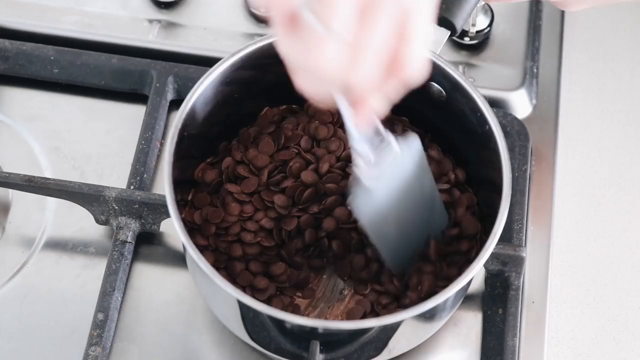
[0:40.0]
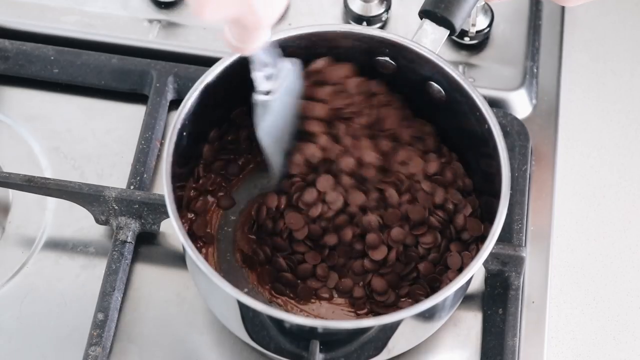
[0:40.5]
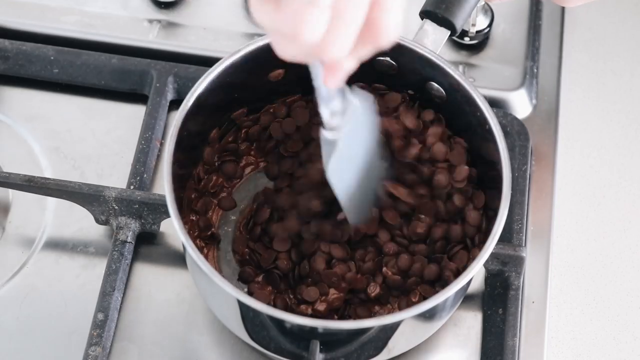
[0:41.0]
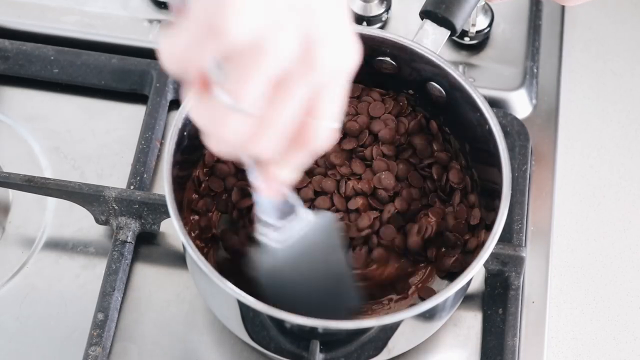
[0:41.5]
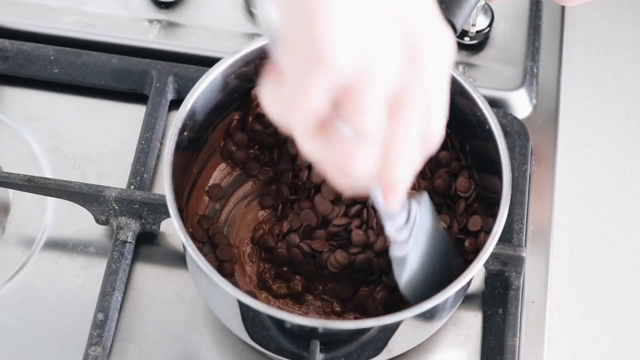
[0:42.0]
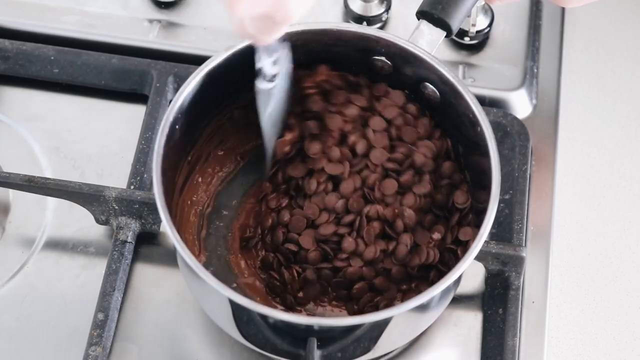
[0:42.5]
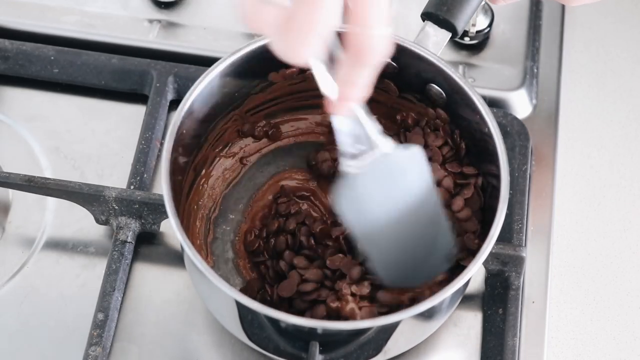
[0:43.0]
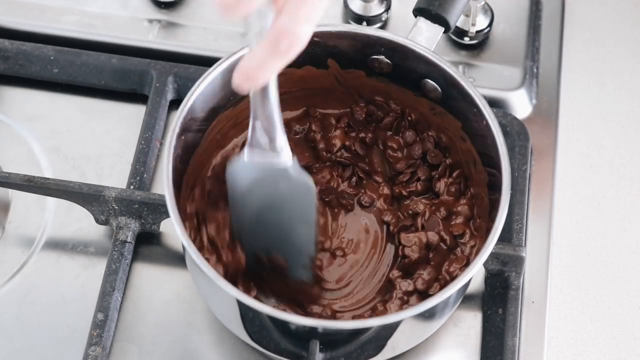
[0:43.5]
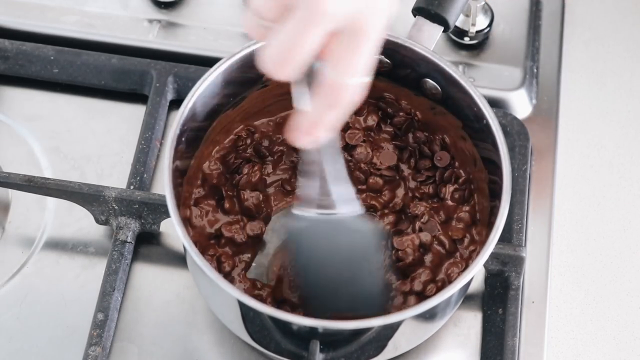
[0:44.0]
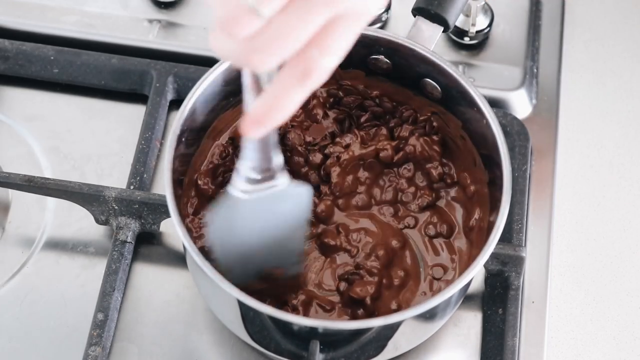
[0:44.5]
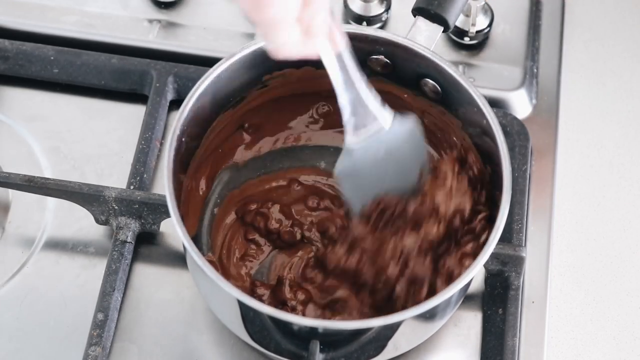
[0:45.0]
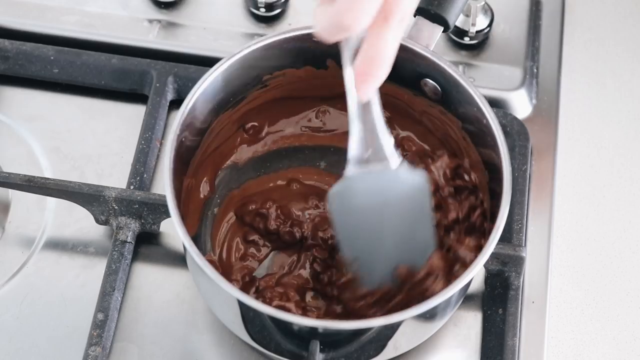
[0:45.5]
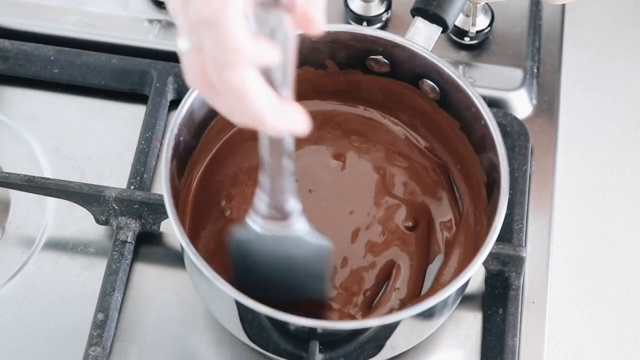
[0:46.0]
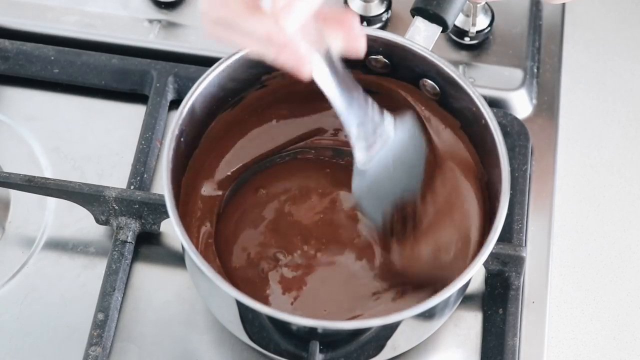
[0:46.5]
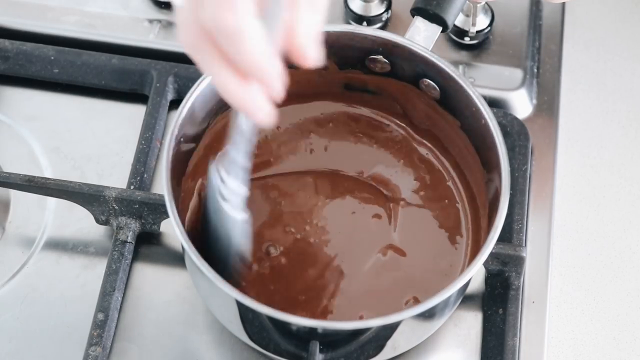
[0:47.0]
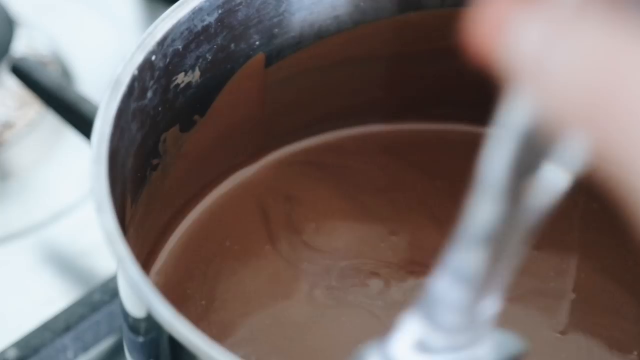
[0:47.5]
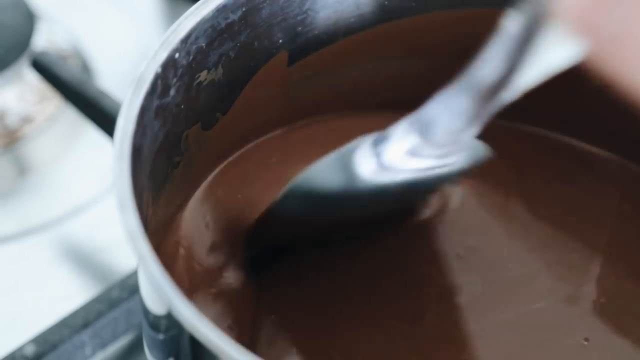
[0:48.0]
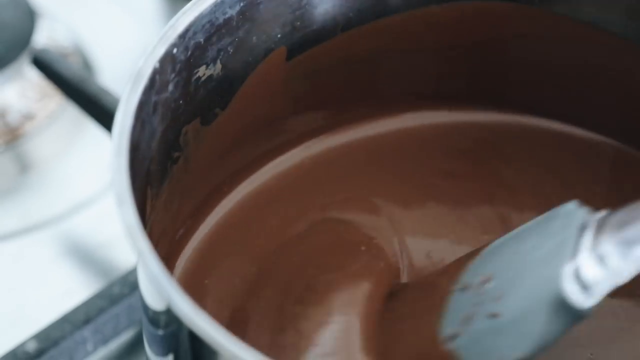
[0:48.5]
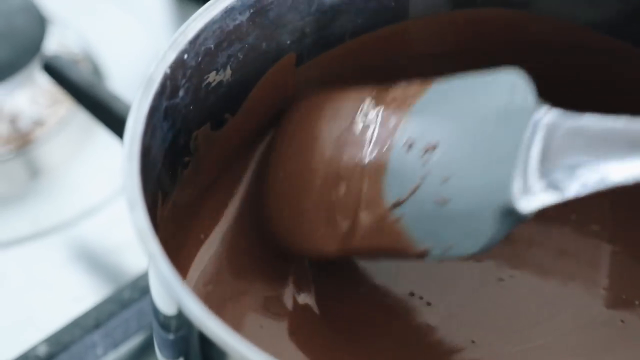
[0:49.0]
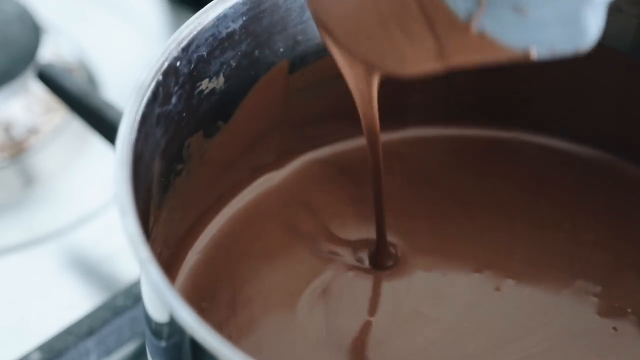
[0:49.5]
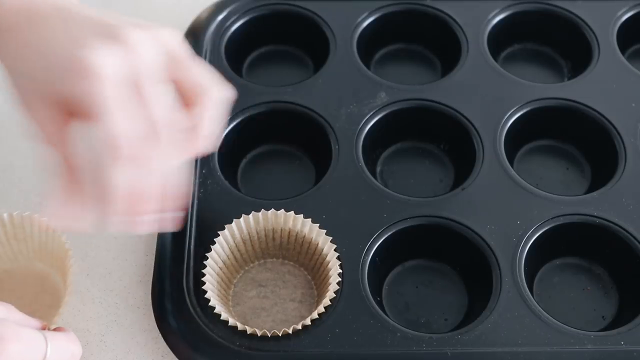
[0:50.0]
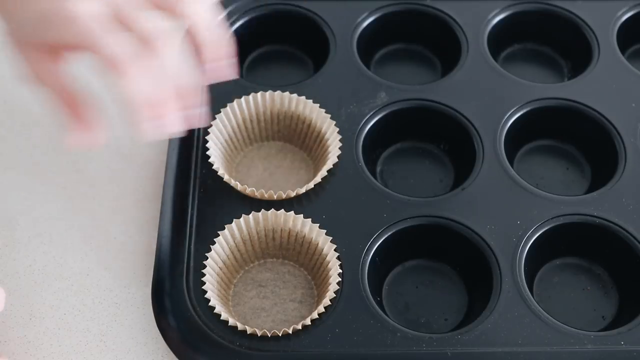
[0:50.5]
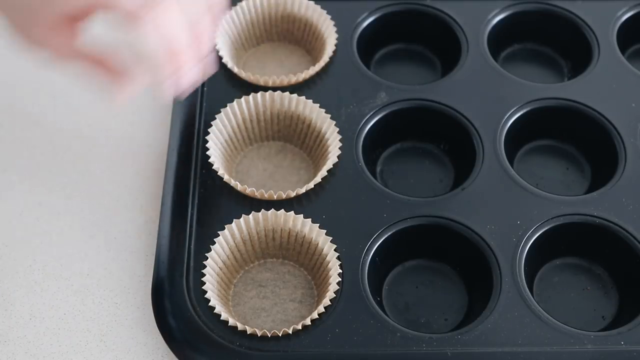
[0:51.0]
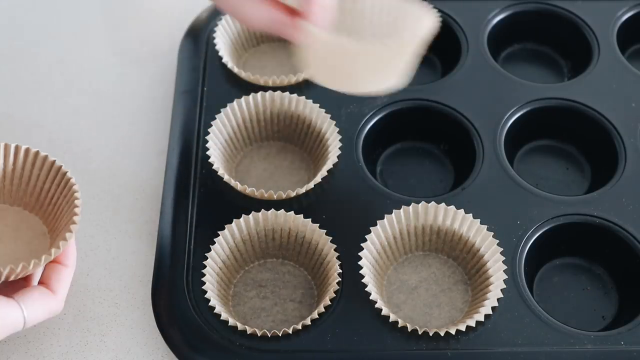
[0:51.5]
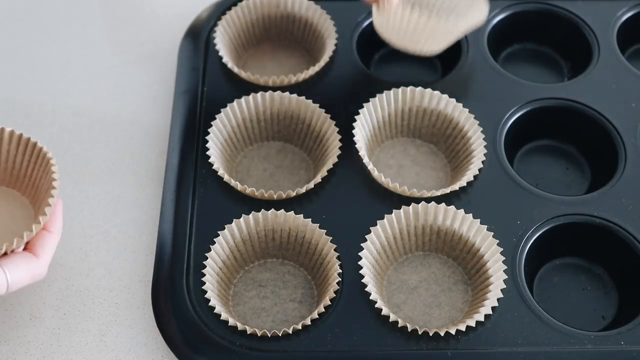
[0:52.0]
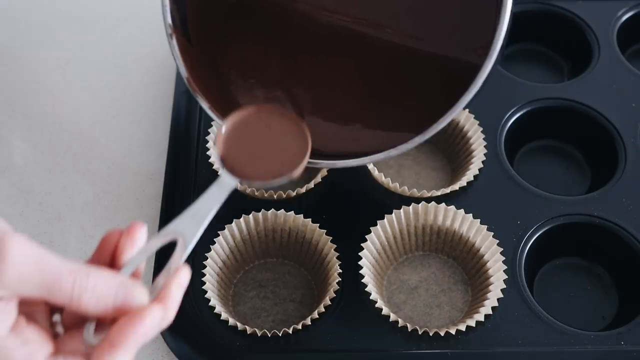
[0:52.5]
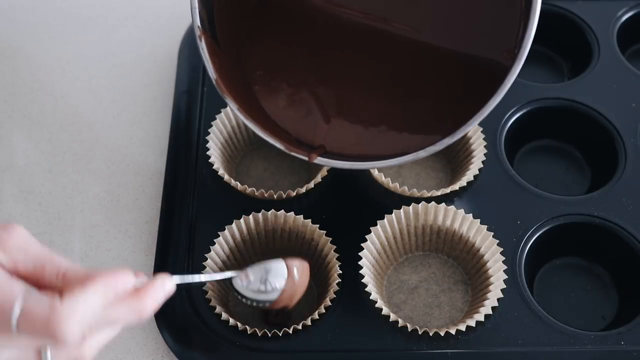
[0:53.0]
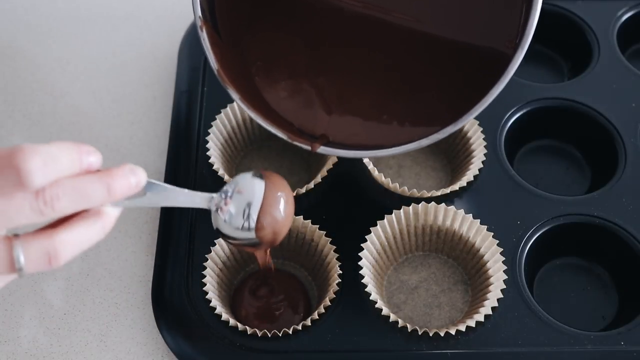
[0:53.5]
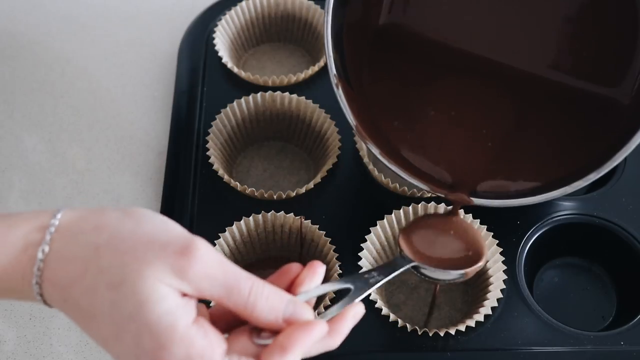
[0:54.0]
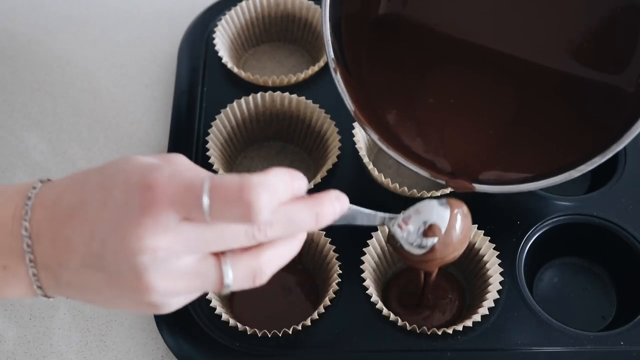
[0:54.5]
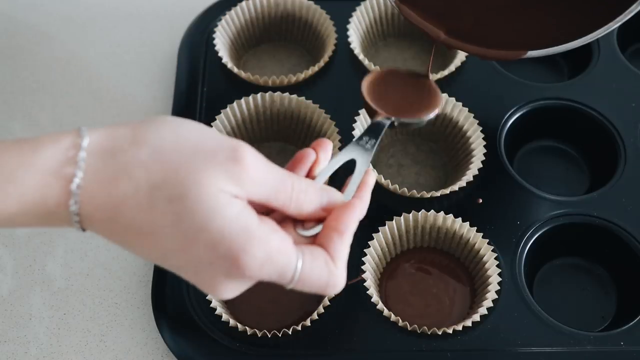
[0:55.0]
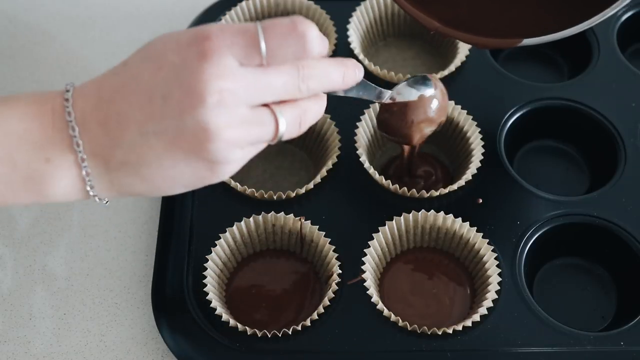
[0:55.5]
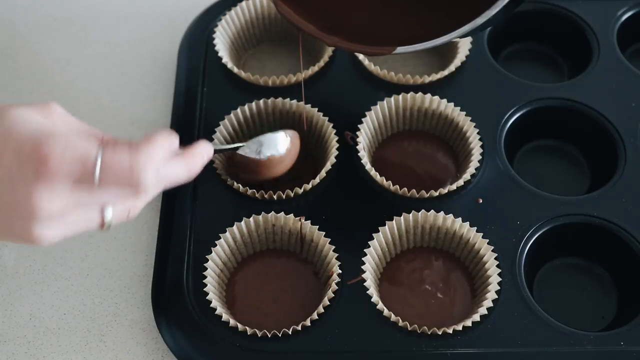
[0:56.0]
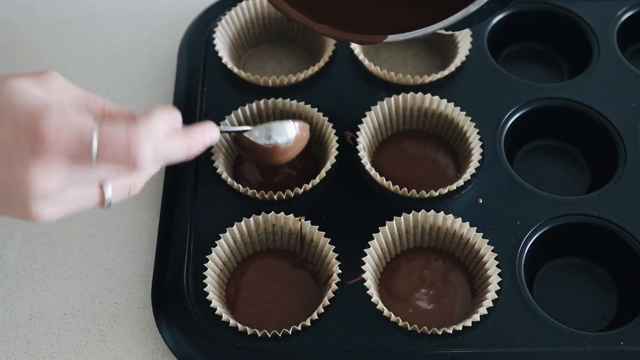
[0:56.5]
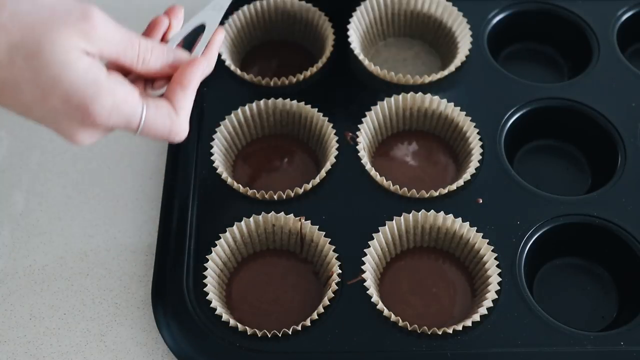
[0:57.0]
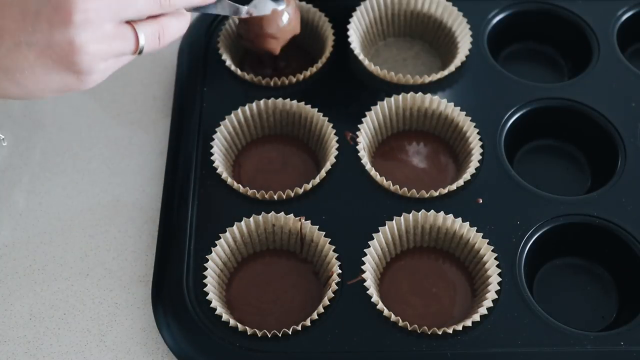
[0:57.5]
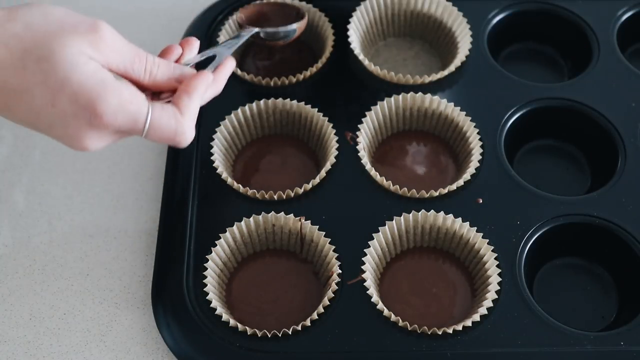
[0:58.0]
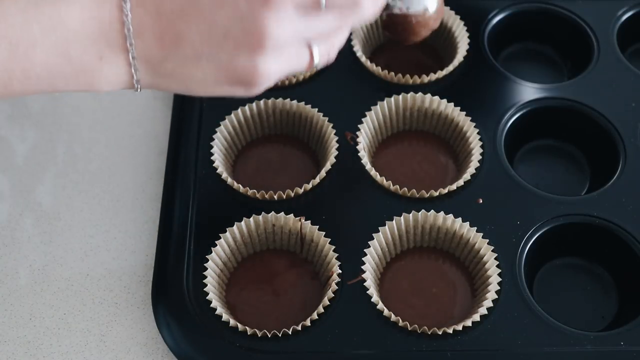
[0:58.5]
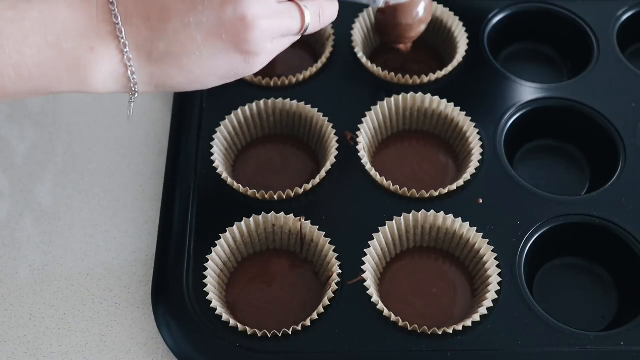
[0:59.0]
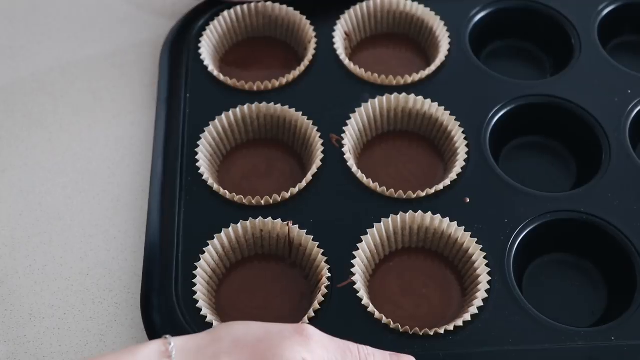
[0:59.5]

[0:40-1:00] In a kitchen, a saucepan is on a stove. A white female's hand stirs chocolate chips and pieces melting in the saucepan with a white spatula, moving them around; the chocolate melts very quickly in time-lapse. The chocolate becomes a medium-colored milk chocolate. She puts empty cupcake wrappers into the slots of a cupcake pan, then pours the chocolate from the saucepan into the empty wrappers using a large, rounded, deep spoon. She has a metal bracelet on her right hand and a ring on her right index finger, and she fills five and then six cupcake wrappers with the chocolate.